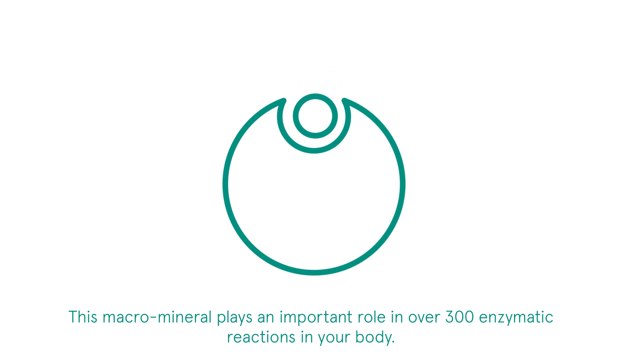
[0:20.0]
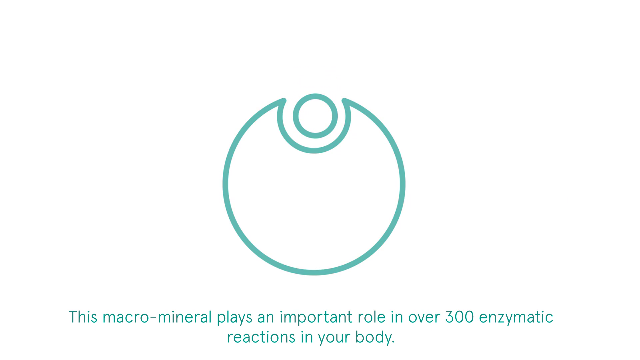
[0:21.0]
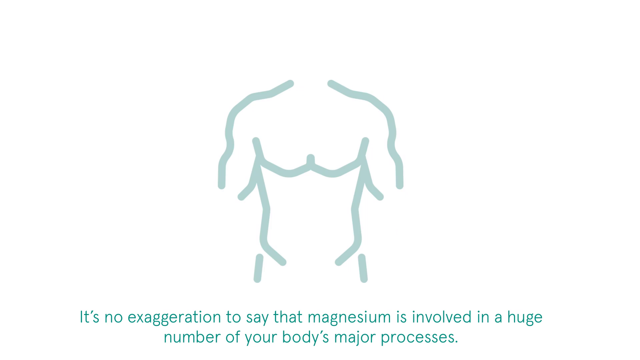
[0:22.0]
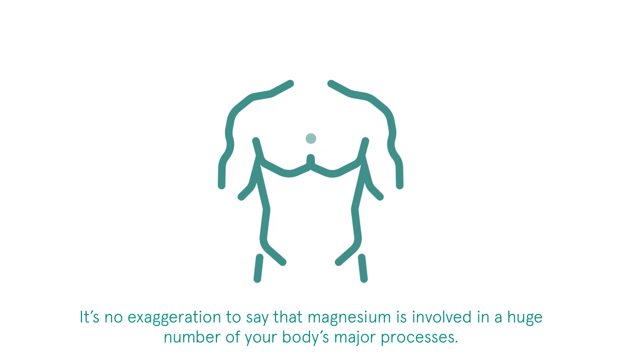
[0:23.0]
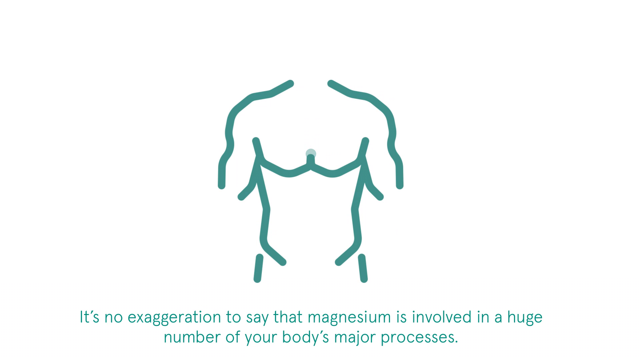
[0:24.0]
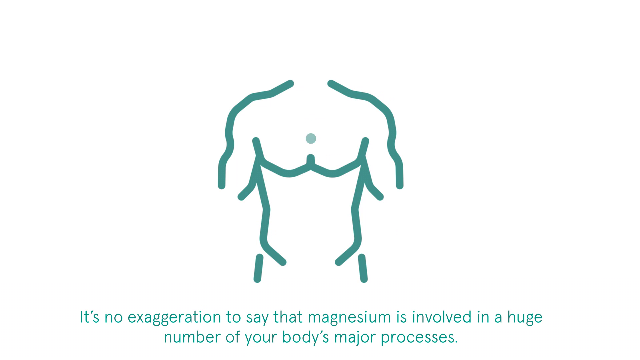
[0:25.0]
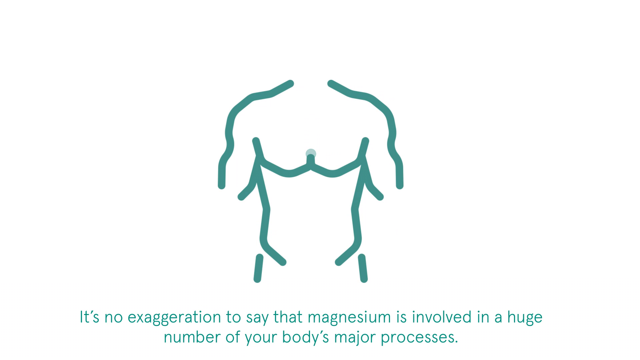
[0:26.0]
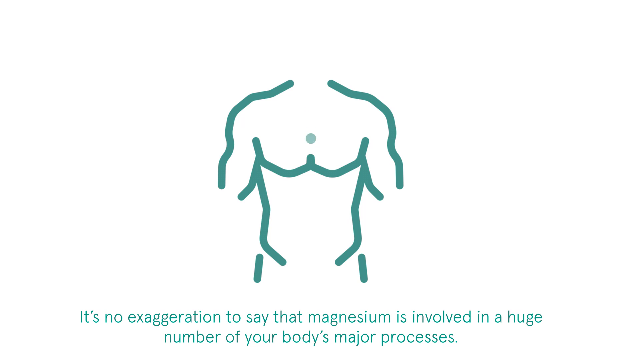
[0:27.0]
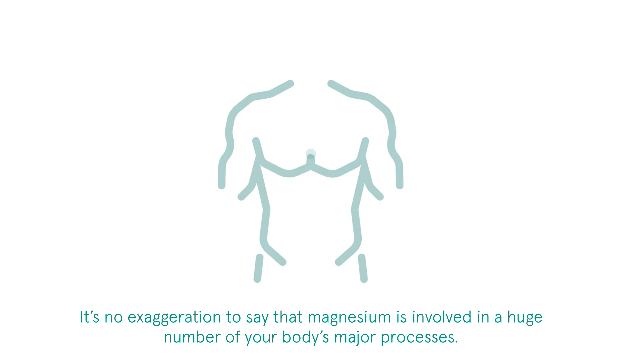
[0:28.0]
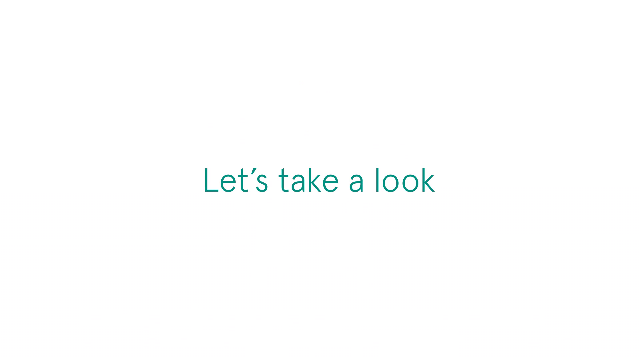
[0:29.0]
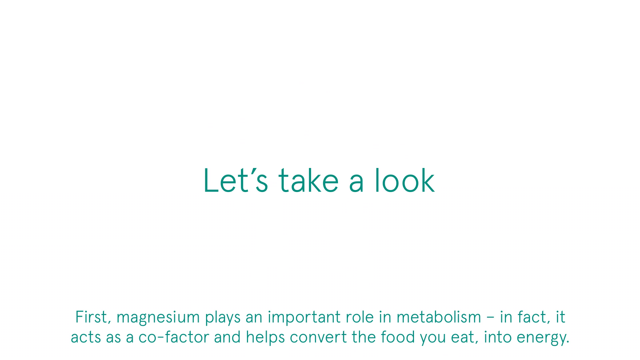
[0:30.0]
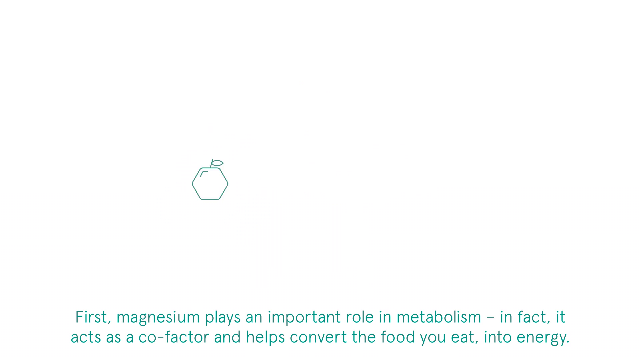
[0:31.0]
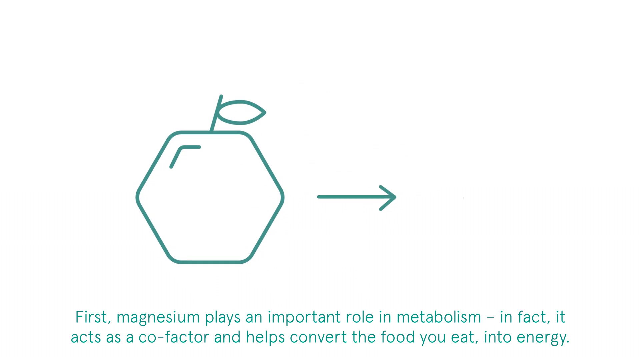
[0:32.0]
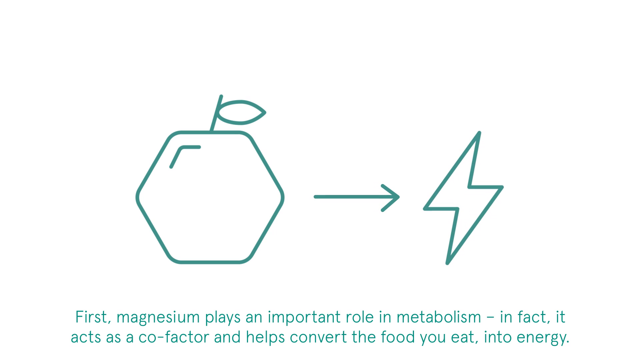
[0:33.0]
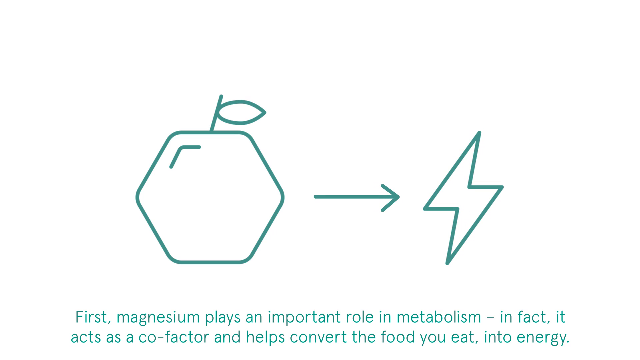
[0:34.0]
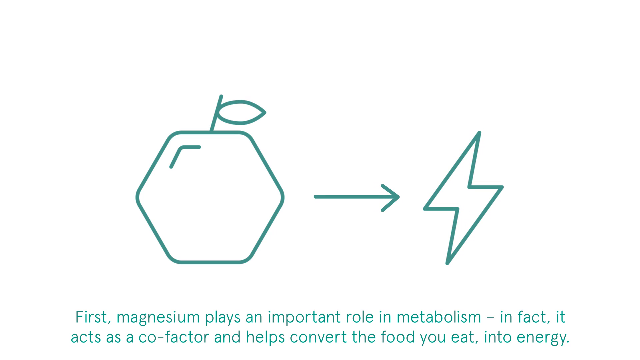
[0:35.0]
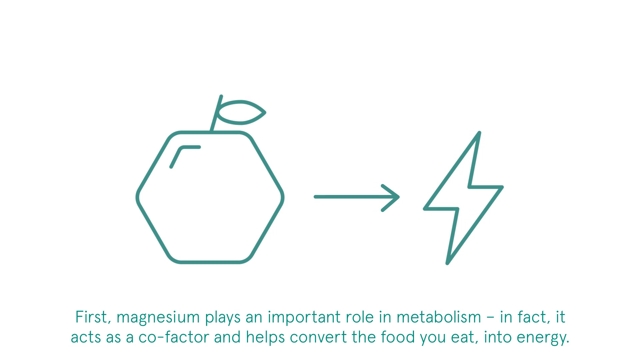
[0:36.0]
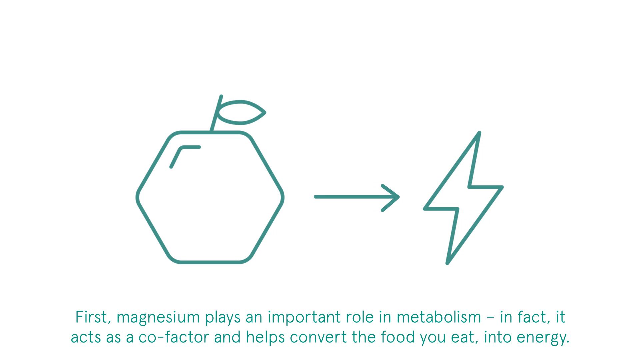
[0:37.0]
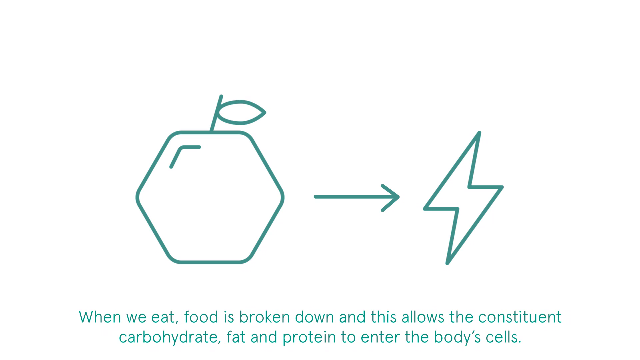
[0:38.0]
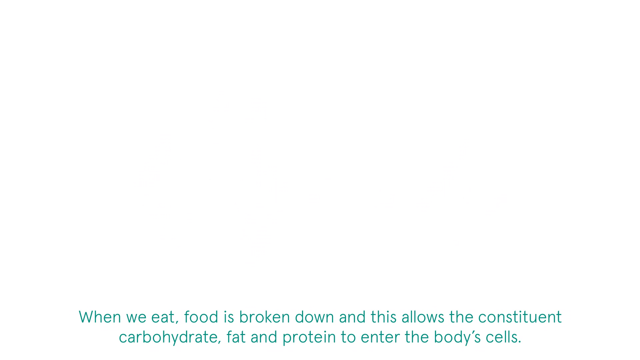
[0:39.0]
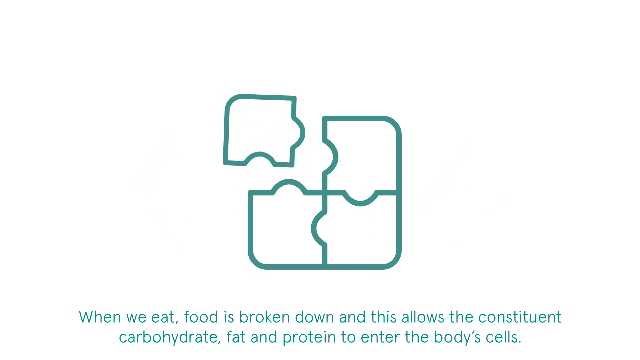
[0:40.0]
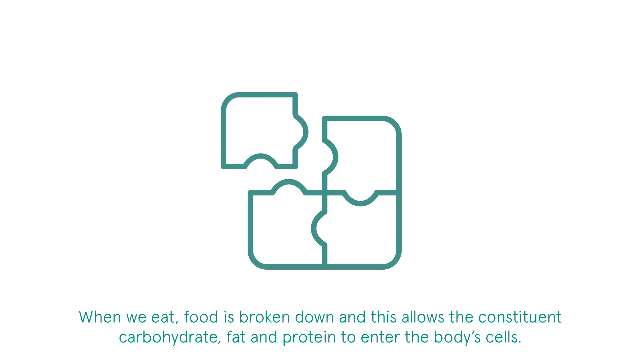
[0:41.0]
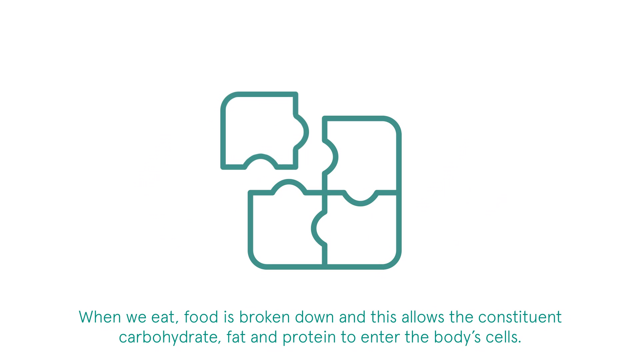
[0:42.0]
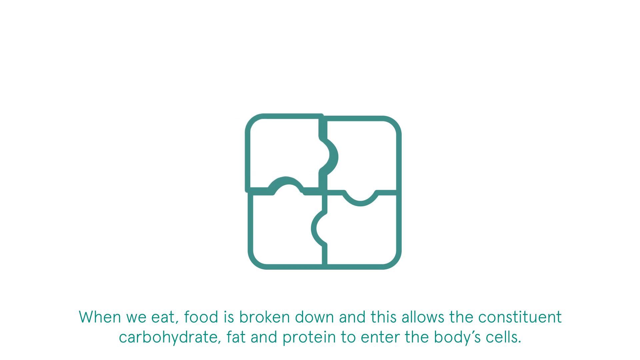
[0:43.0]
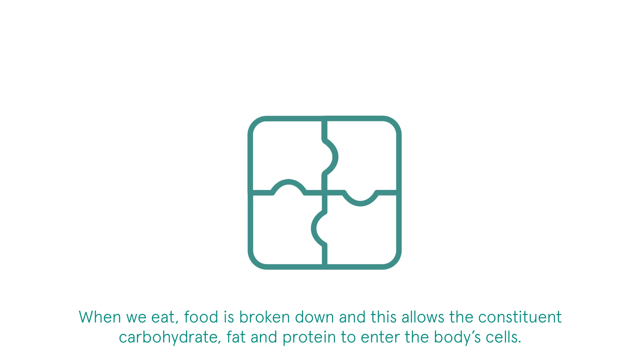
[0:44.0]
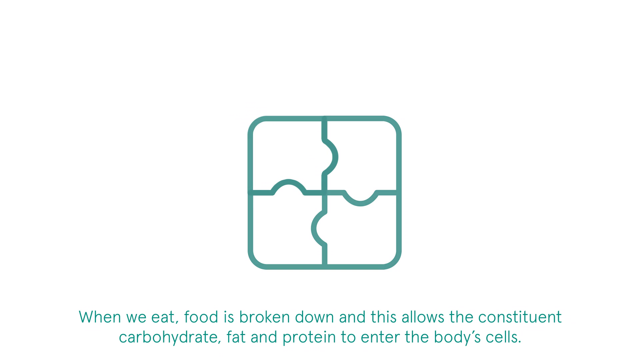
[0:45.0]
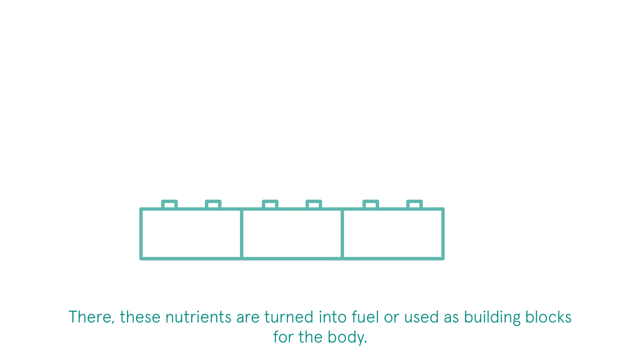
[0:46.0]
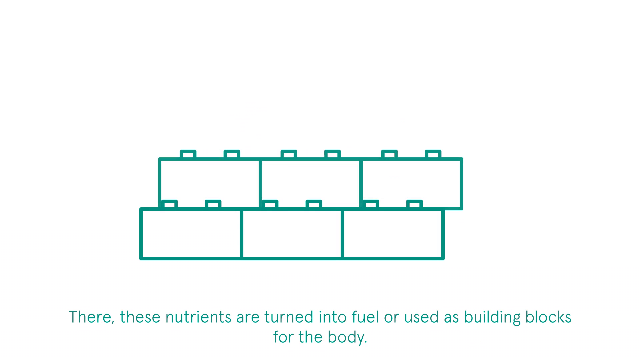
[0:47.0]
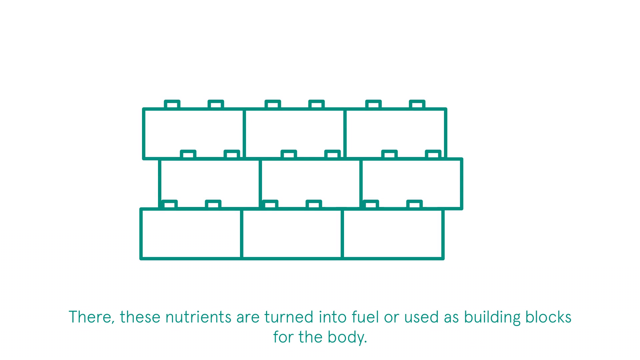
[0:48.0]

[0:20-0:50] A slide shows a teal outline of a roughly round shape, apparently a cell. Inside the circle is an indentation, with a round circle coming into it. Teal text at the bottom reads "It's no exaggeration to say that magnesium is involved in a huge part of the process of your body." A teal outline of a male torso follows. The next slide shows a six-sided blue hexagon that looks like an apple, with a leaf coming out of it and a mark suggesting light shining on it. A teal arrow points right to a lightning bolt with a teal outline. Text says "magnesium plays an important role in metabolism. In fact, it constitutes" before the video moves to a new slide.